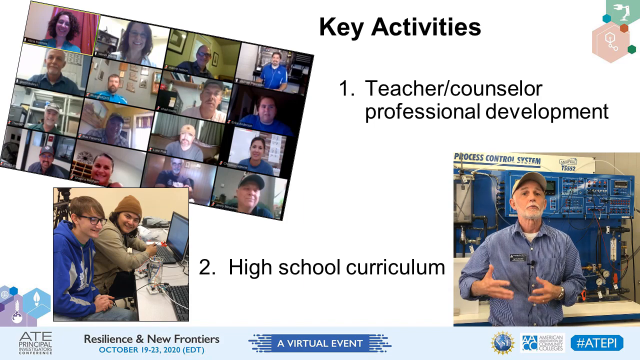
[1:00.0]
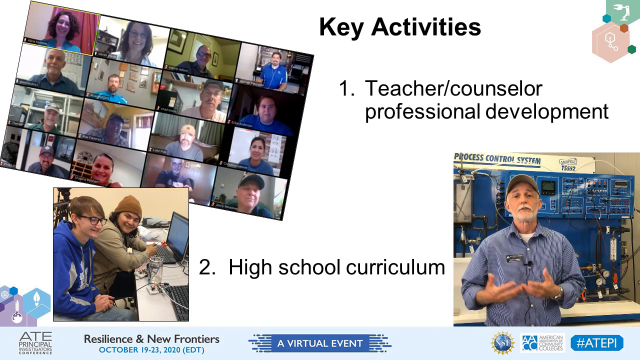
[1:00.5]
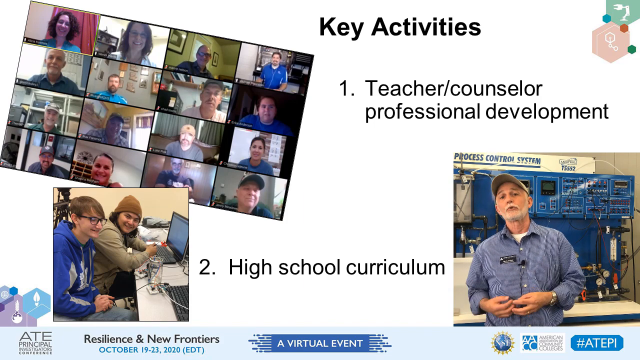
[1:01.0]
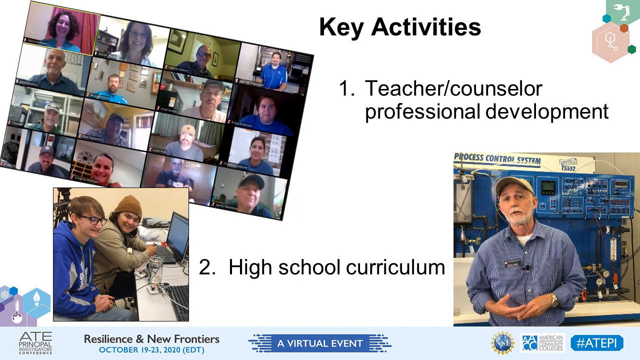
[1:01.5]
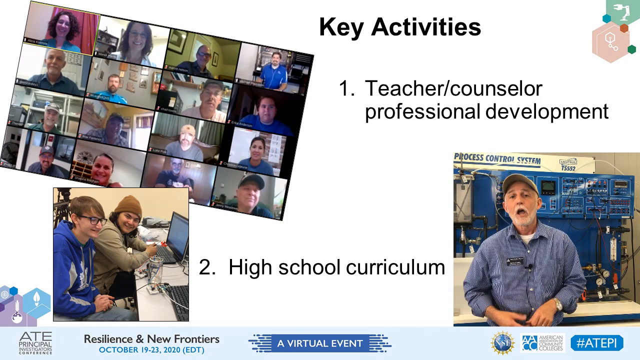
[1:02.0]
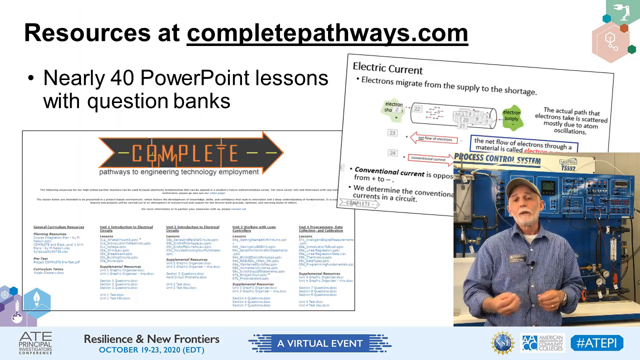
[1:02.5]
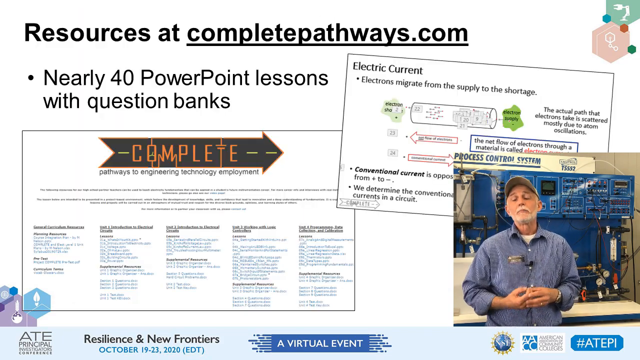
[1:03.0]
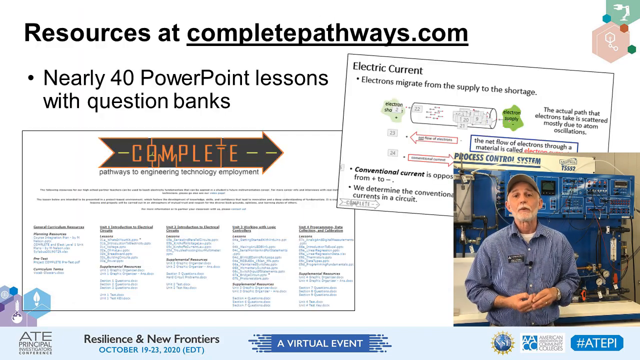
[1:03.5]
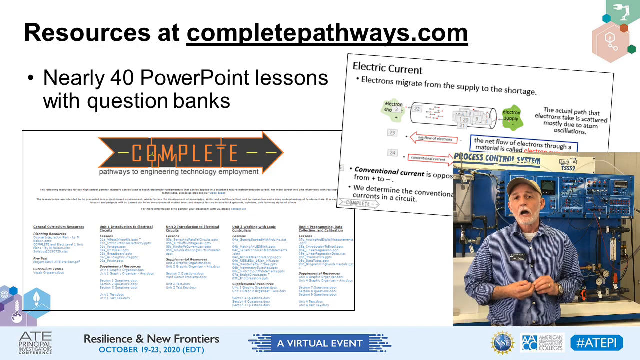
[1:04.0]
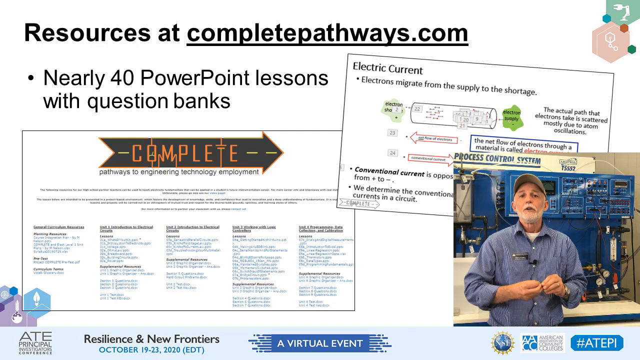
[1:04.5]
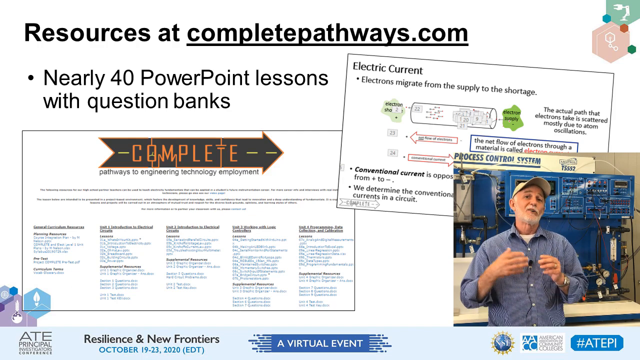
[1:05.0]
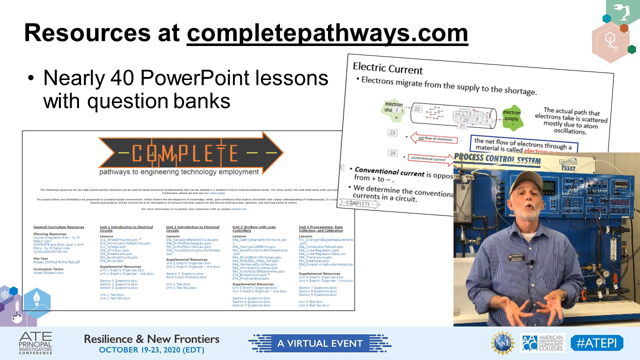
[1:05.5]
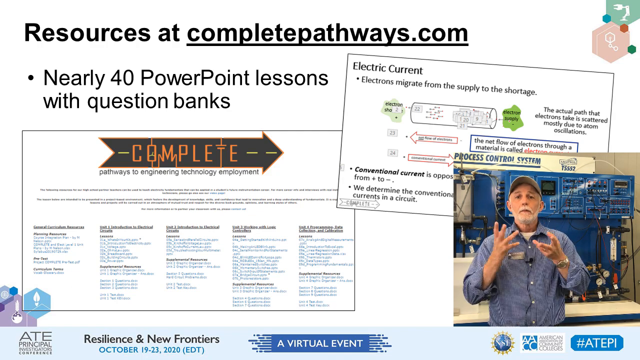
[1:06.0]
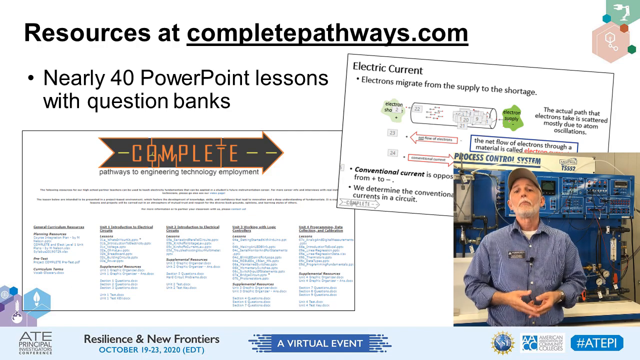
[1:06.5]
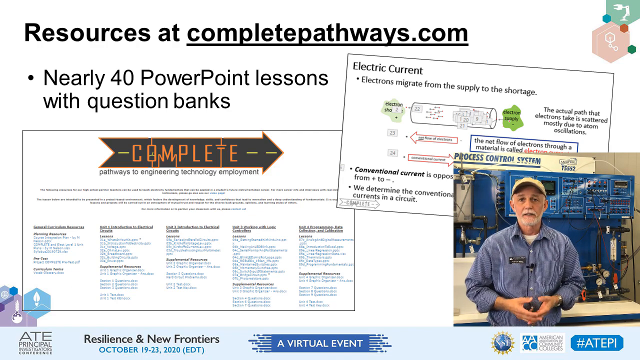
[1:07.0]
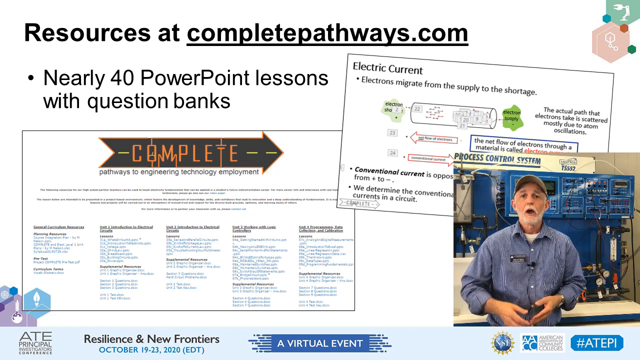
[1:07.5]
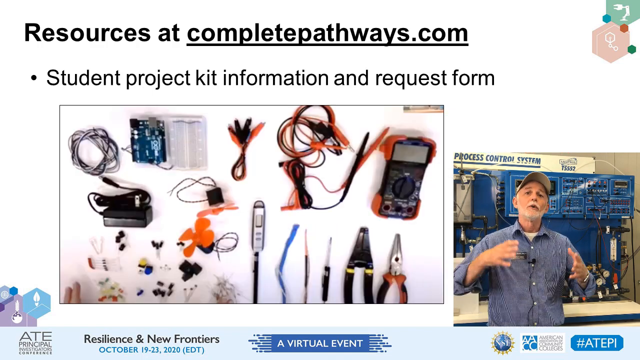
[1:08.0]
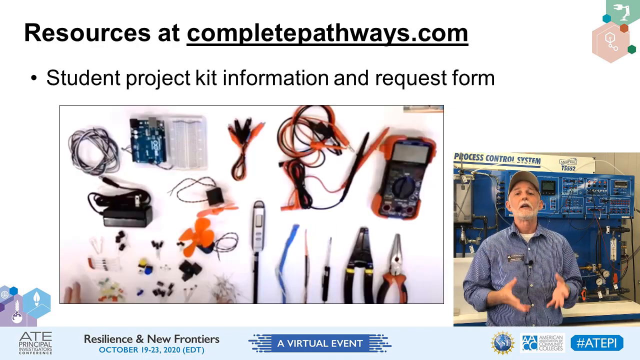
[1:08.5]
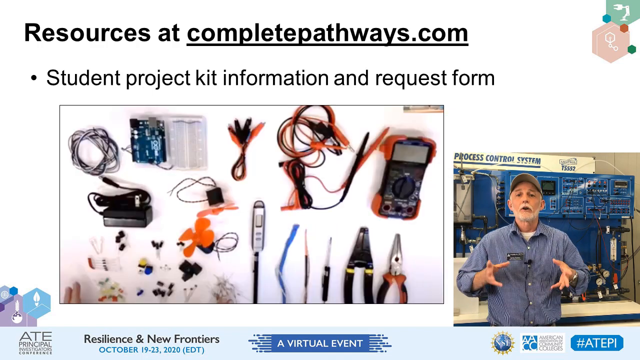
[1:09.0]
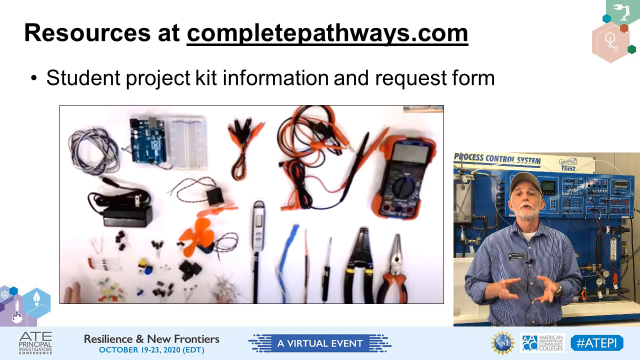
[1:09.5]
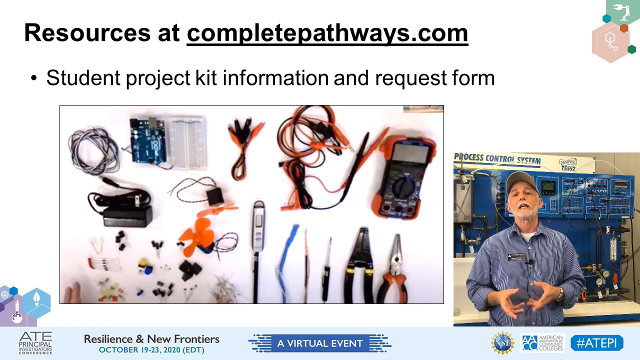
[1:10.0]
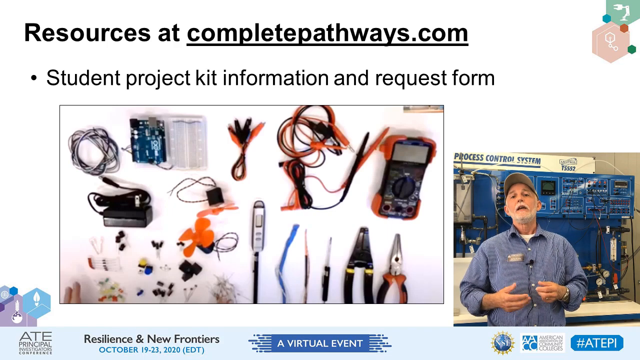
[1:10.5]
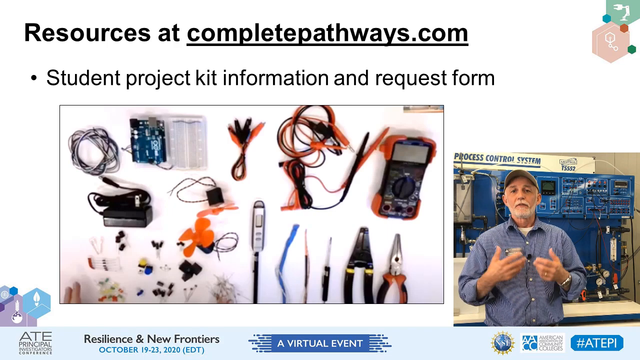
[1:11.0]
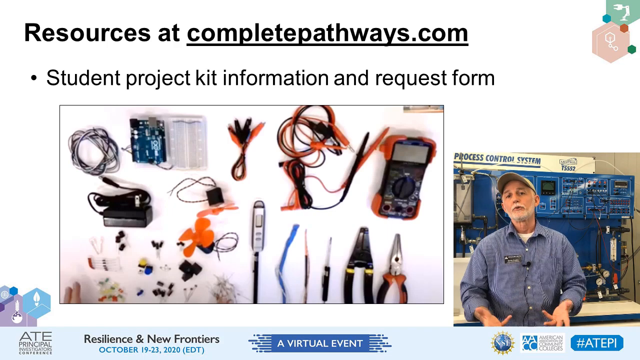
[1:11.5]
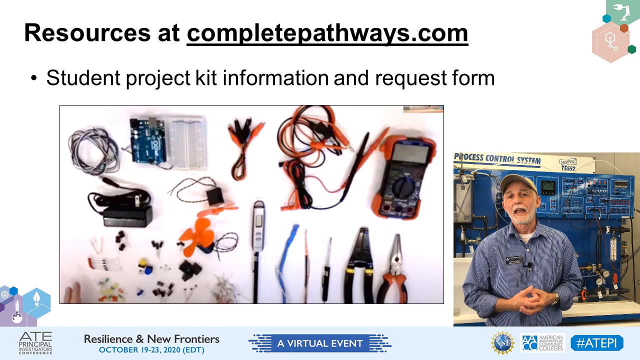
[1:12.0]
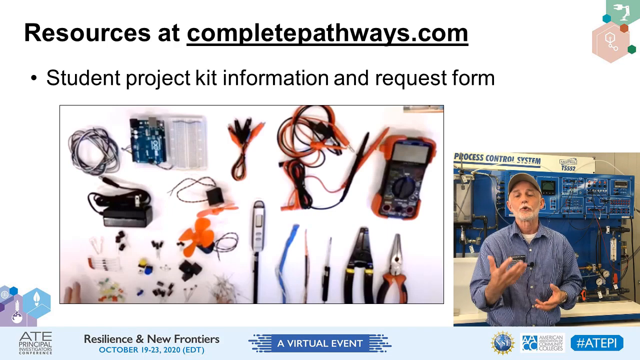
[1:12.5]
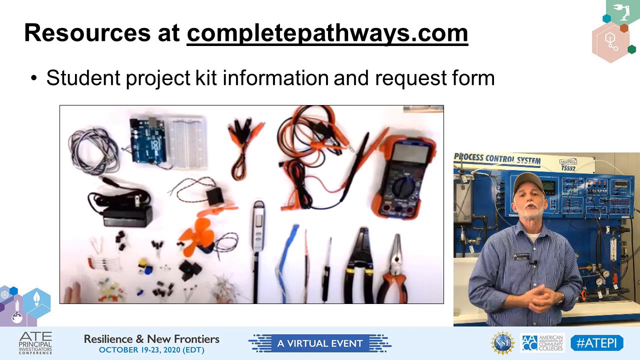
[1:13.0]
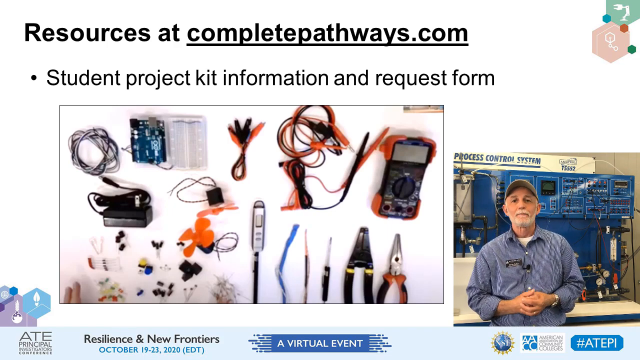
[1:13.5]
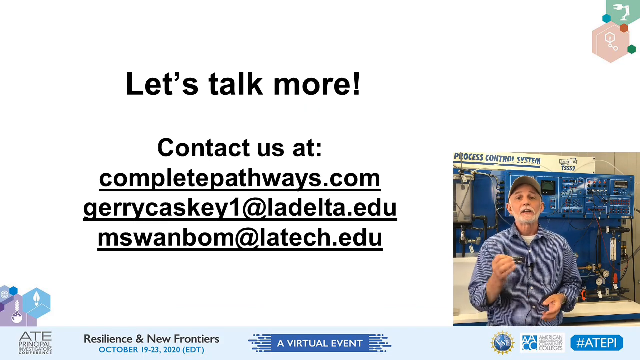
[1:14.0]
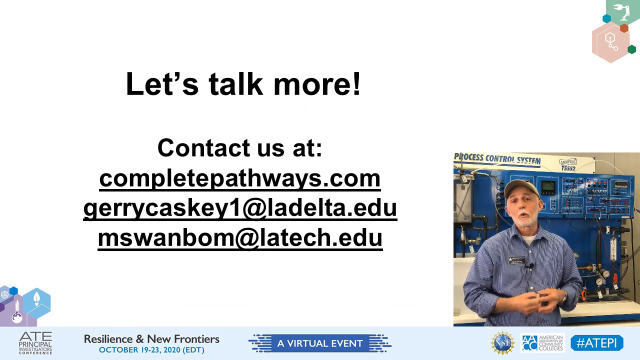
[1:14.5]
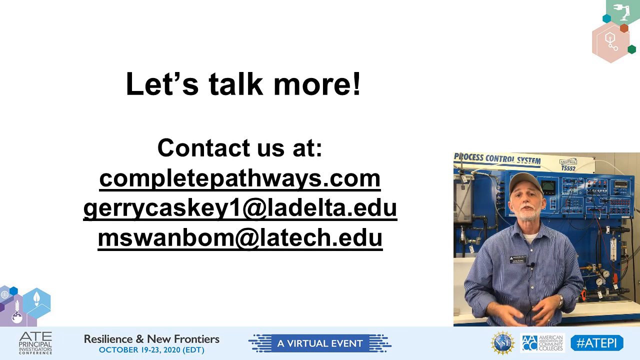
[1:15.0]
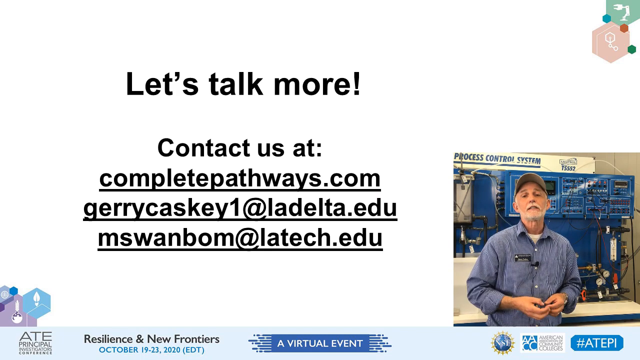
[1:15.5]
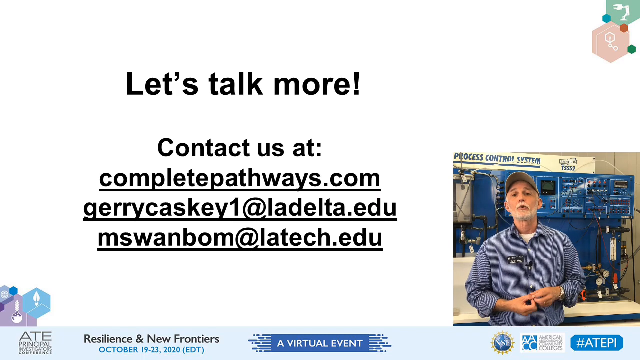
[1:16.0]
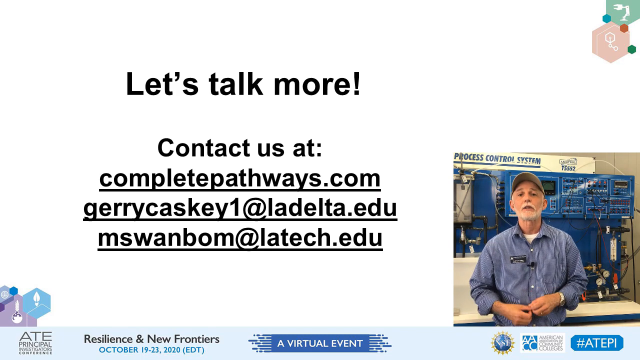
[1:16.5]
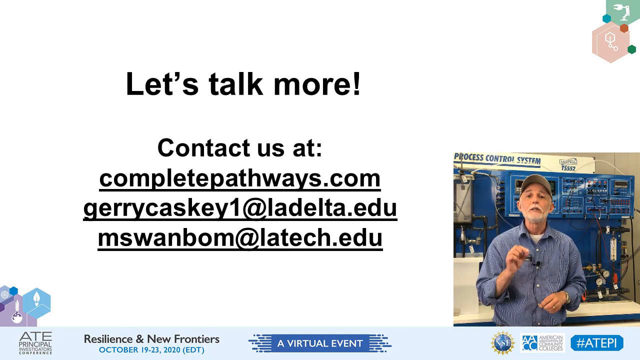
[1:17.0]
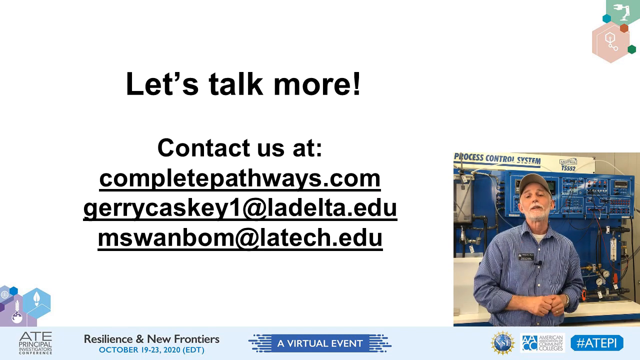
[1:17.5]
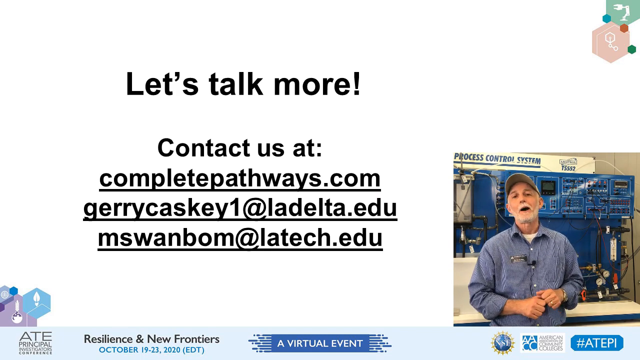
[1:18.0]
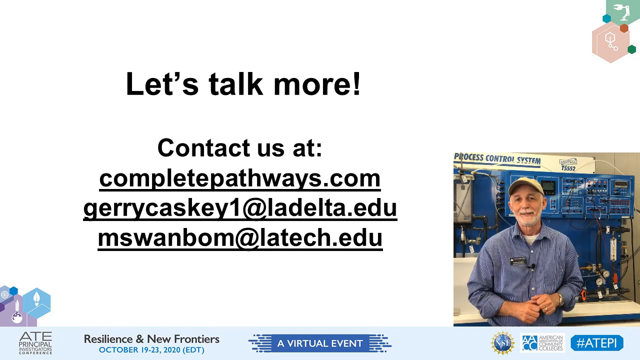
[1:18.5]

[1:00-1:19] The key activities screen, with a sort of white background, continues, showing what appear to be students and instructors. It then transitions to another screen showing resources at CompletePathways.com, with nearly 40 PowerPoint lessons and a question bank available at the website. The older man in a blue shirt is still shown, wearing a kind of hat, with the cap being kind of green, in a sort of mechanical/industrial-style workshop. The video then shows different equipment for electricians, with various tools. A final screen reads "let's talk more" and lists various contacts, including different emails and a website.